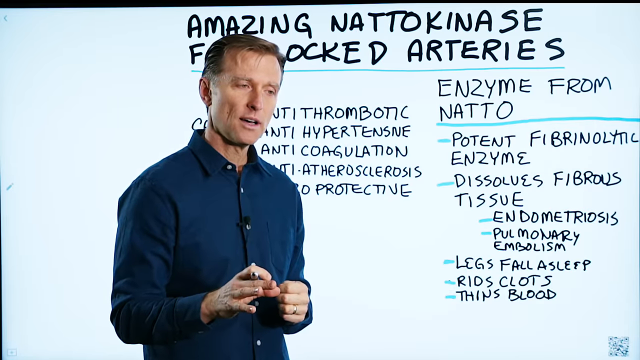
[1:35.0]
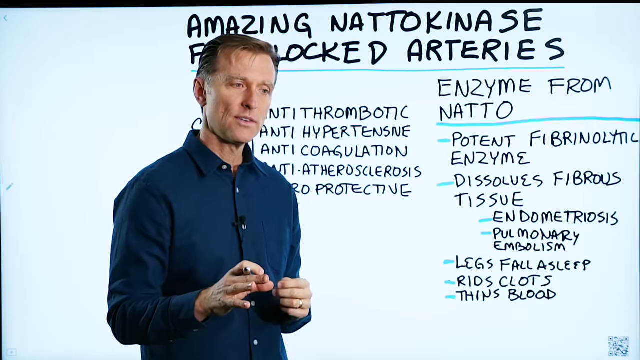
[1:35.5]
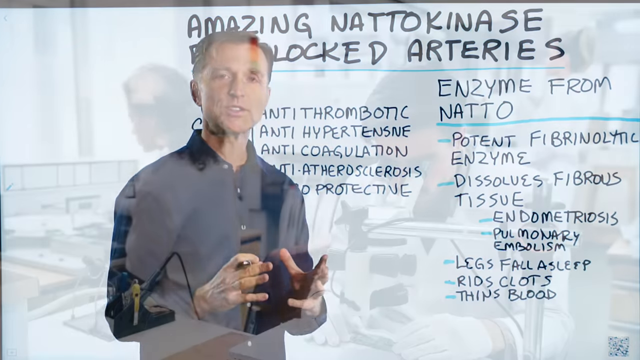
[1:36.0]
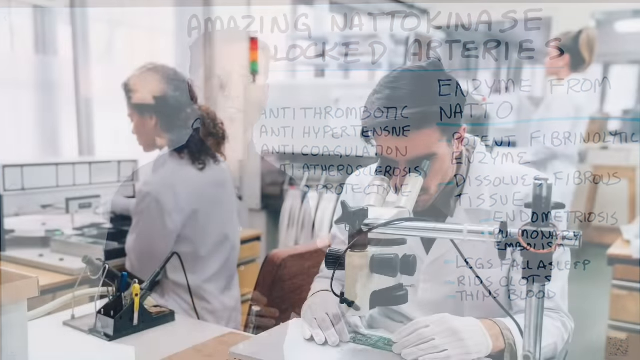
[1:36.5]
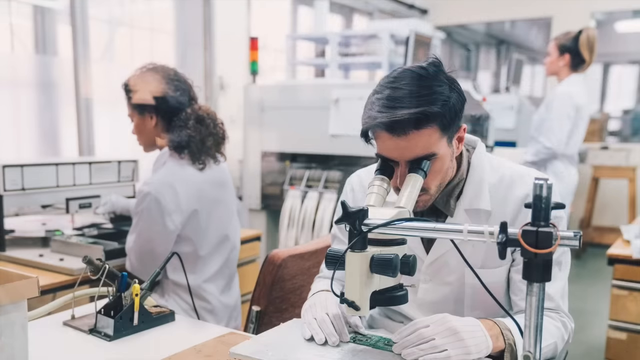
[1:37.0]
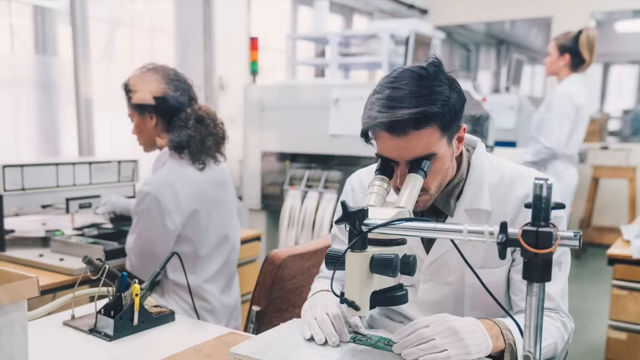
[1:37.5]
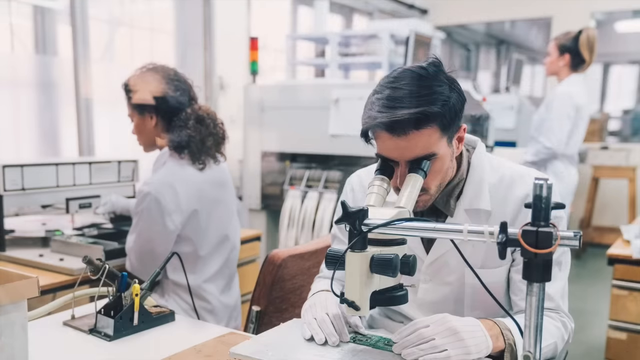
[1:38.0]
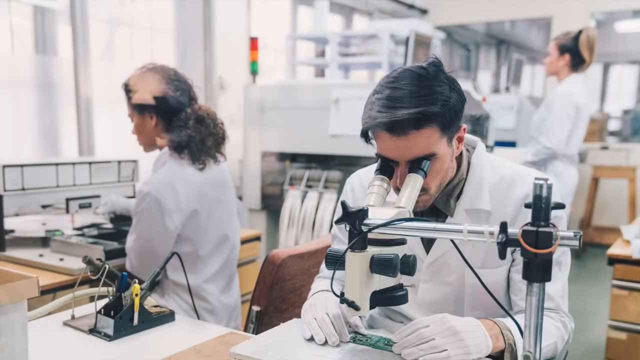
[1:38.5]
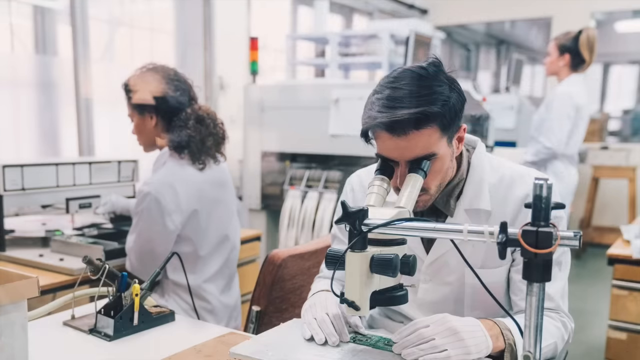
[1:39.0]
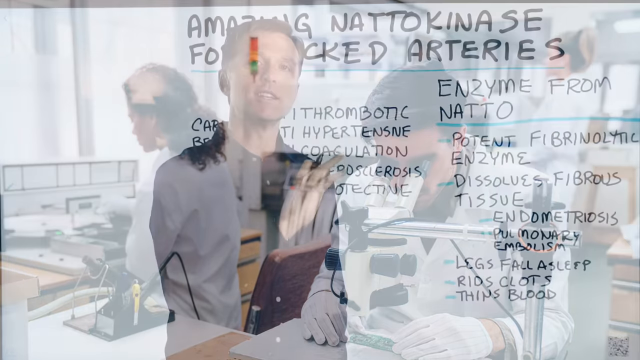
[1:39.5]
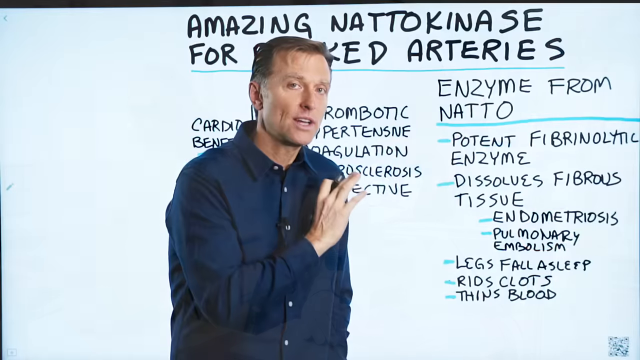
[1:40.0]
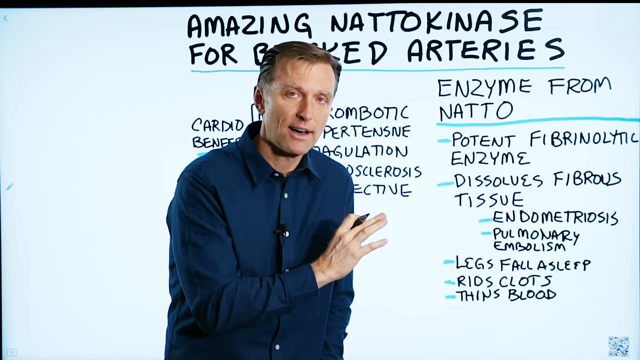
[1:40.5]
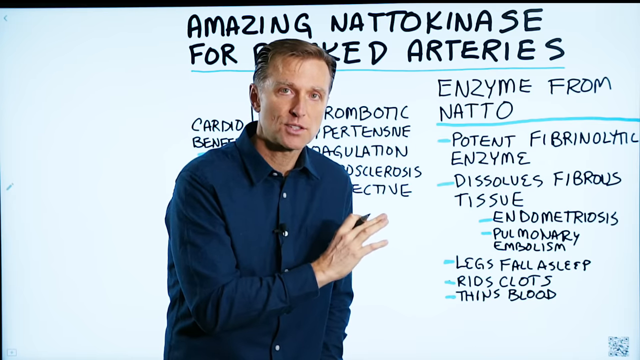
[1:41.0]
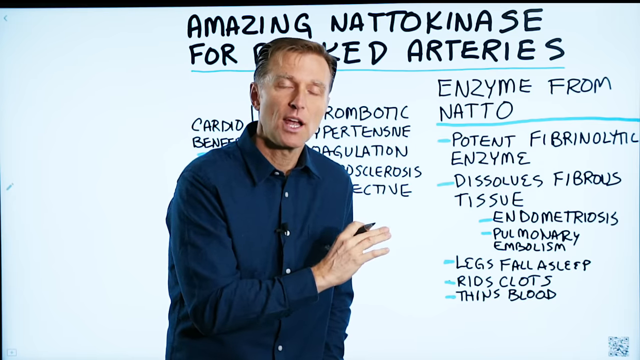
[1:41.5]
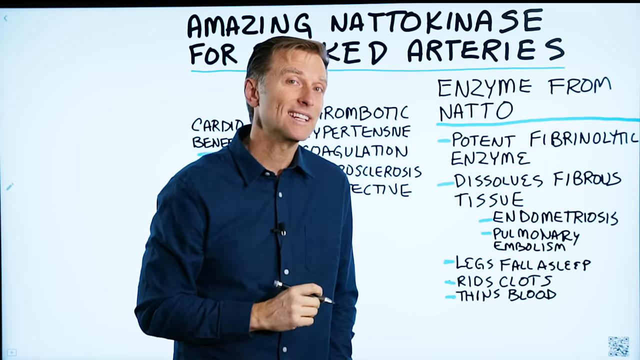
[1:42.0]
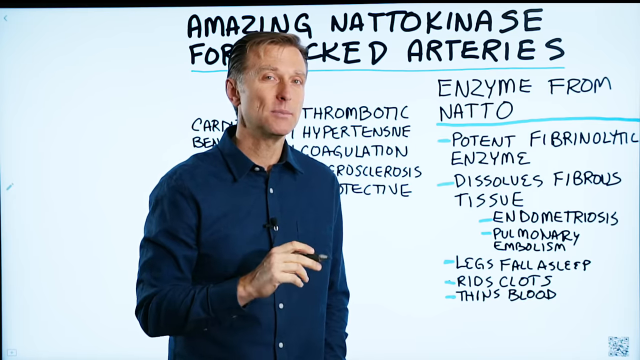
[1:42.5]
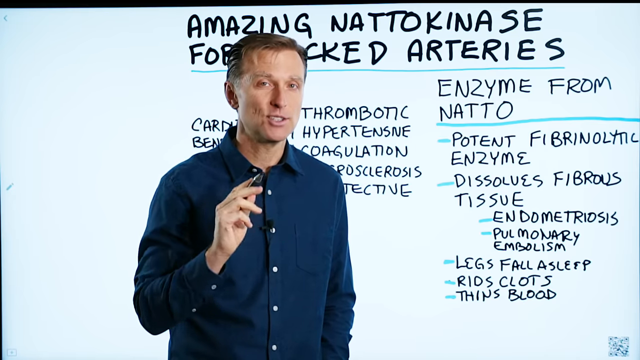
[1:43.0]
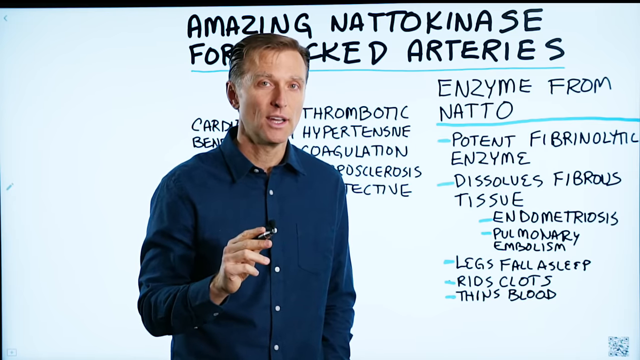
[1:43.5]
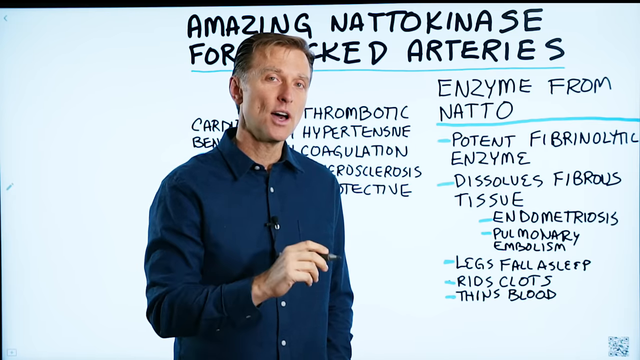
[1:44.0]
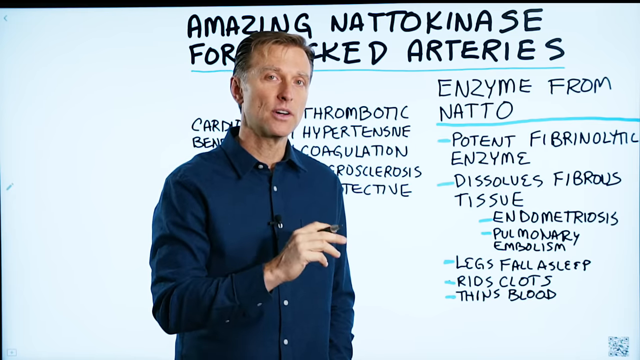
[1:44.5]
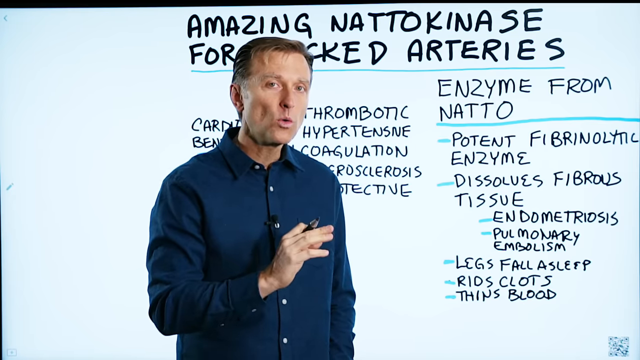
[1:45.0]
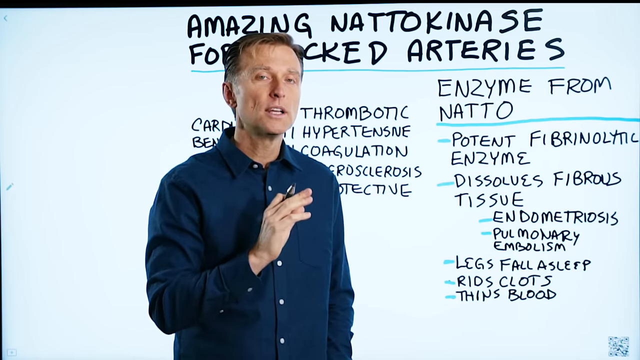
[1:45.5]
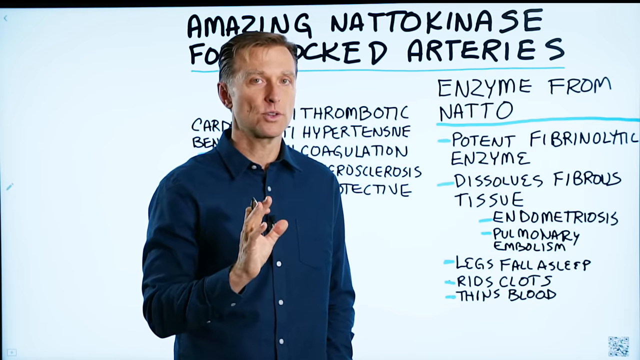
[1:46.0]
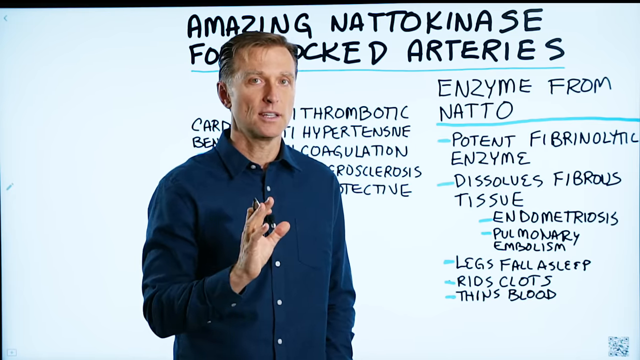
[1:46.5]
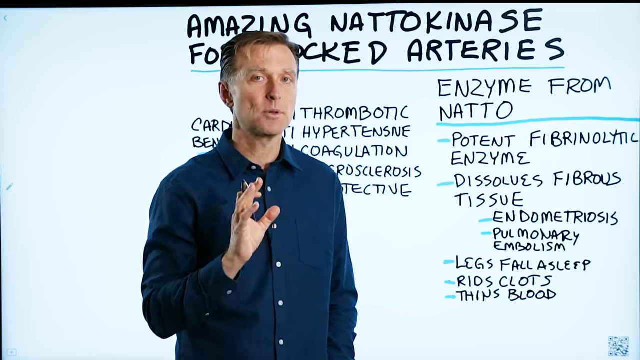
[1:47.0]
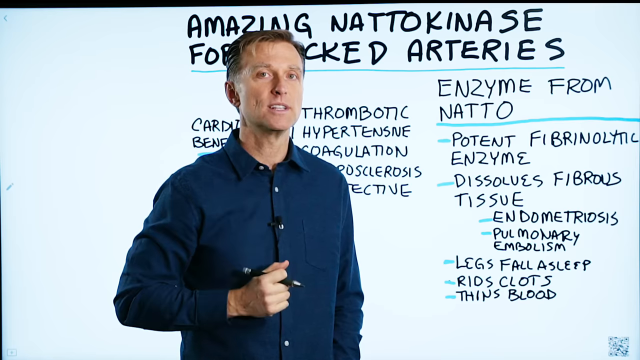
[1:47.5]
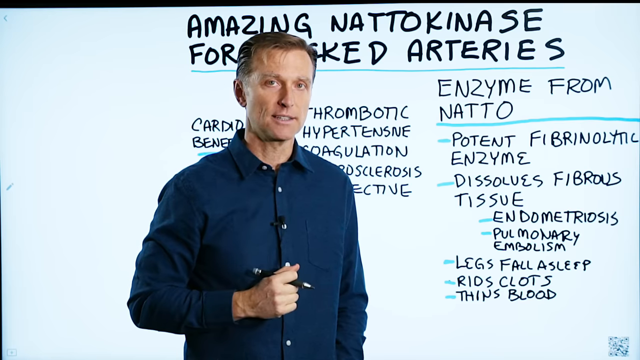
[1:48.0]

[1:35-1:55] The white man in the dark blue shirt stands in front of the whiteboard, looking directly at the camera and not seeming to reference the board. A still stock photo shows scientists in a lab looking through a microscope, and then the video switches back to him, apparently wrapping up his speech. Advertisements for his other videos pop up, and the video fades to black, with the last six seconds being a black screen.